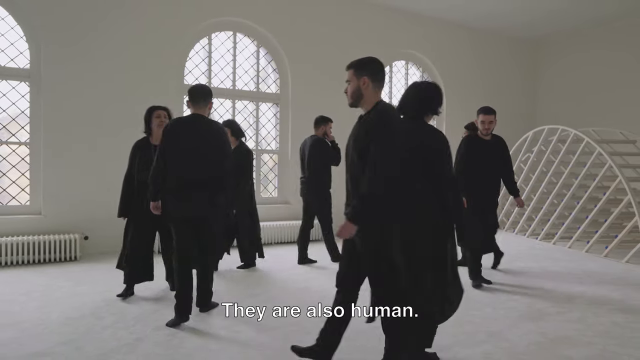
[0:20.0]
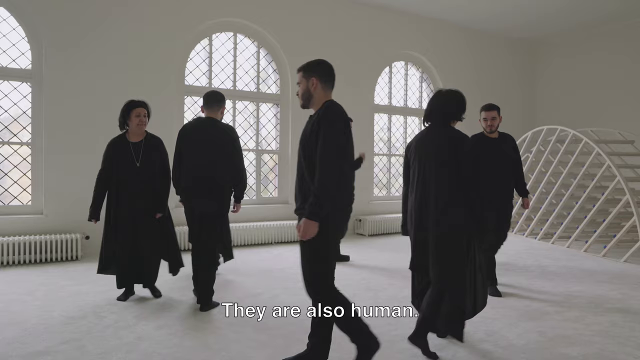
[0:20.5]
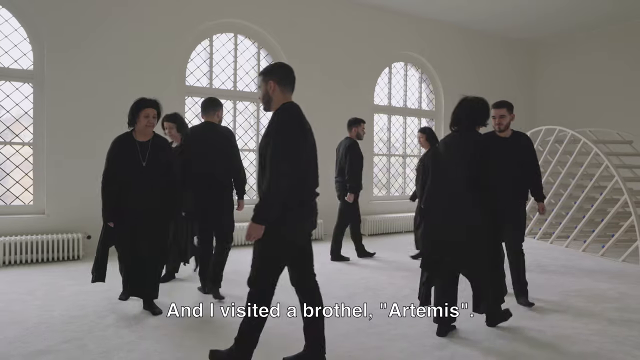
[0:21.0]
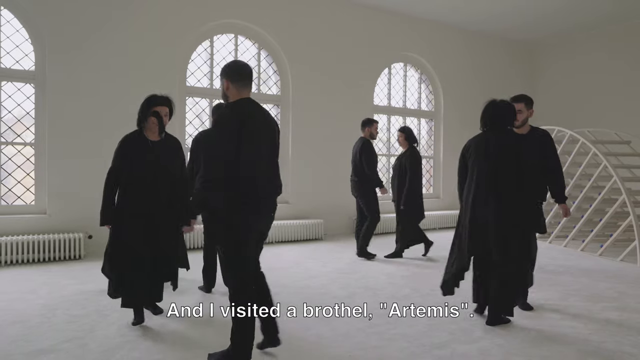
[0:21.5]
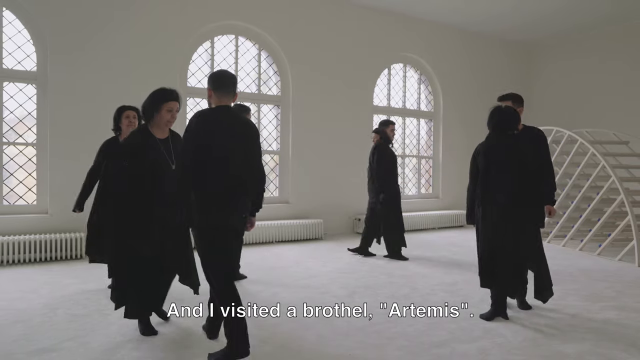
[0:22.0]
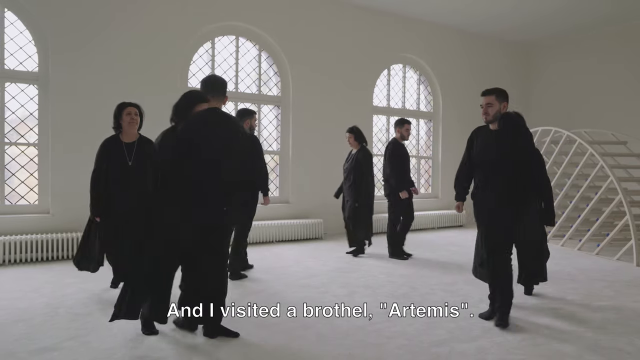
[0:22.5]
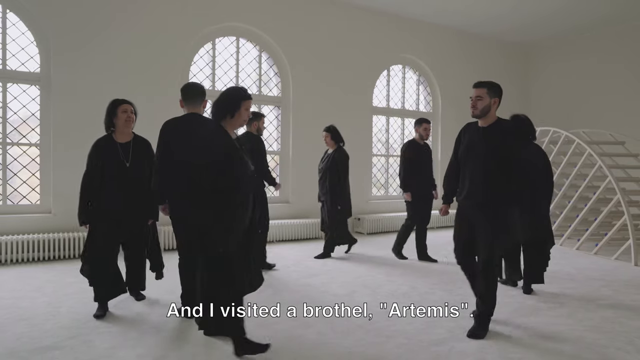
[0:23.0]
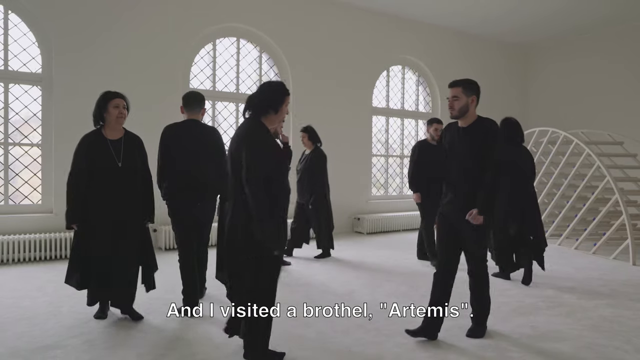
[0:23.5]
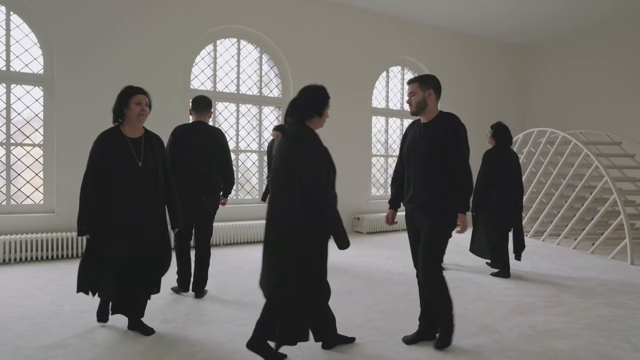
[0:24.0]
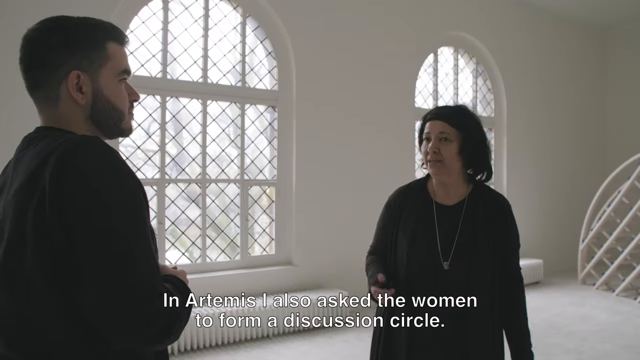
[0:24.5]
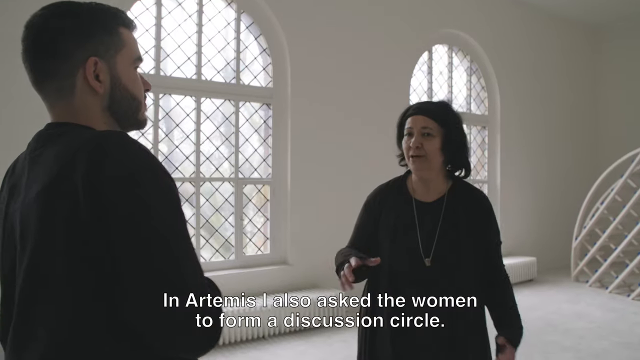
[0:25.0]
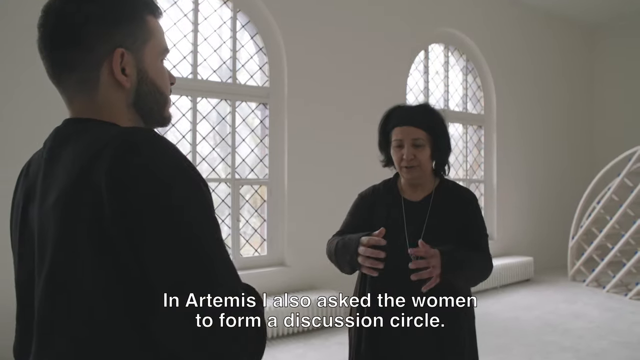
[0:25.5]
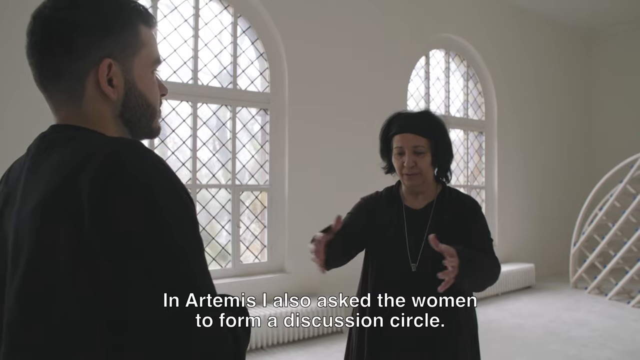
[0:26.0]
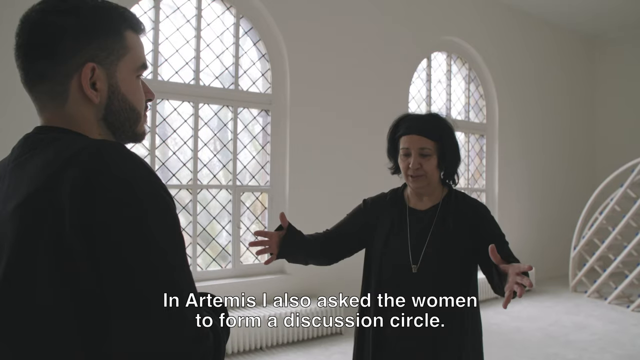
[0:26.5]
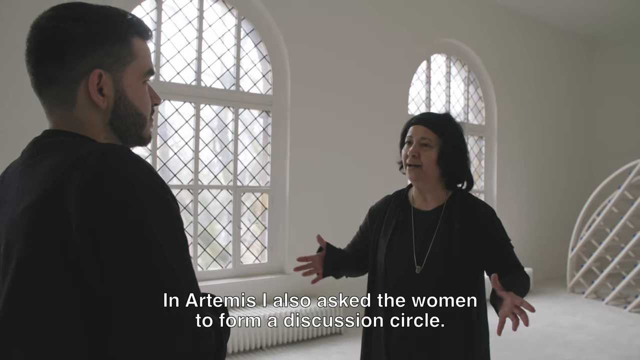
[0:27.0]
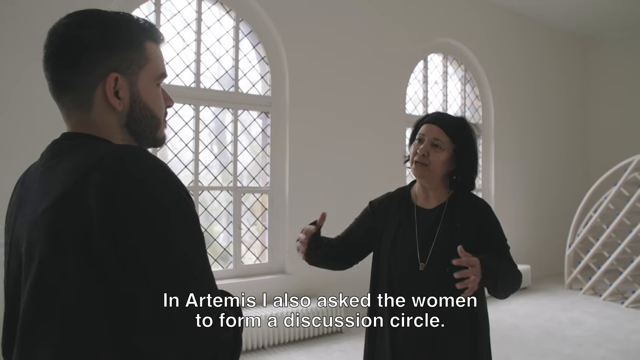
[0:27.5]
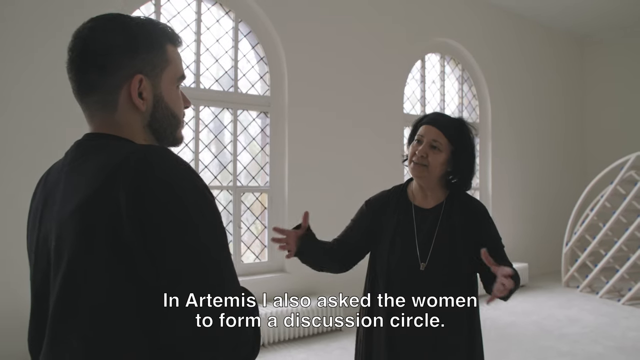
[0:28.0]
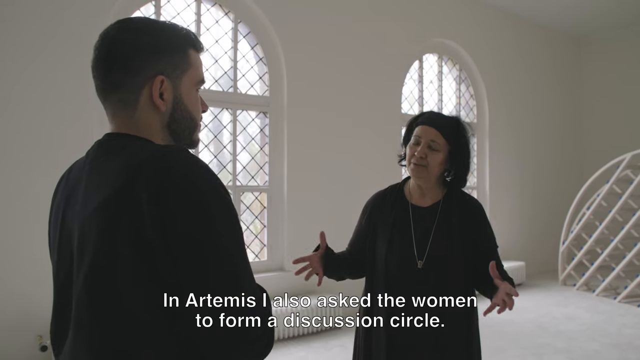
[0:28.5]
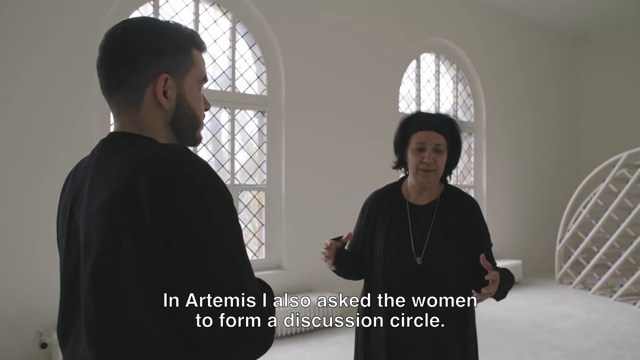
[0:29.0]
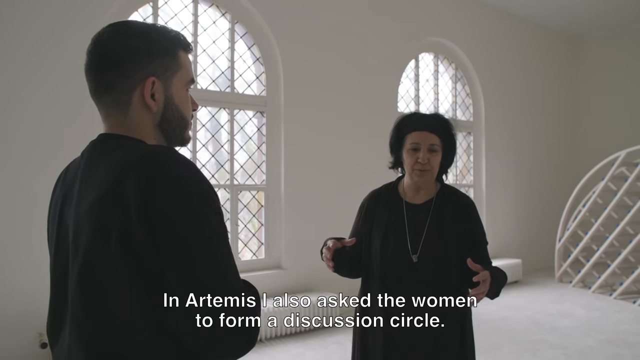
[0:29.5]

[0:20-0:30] The people, apparently at least about nine of them, are walking around and start to talk to each other. At the start, the bottom caption says "they're also humans". A slightly older lady talks to a young man, and the caption on the screen says "I visit the brothel." Then it says "in our team, if I also ask a woman to form a discussion circle". The woman has dark hair and appears to wear a black headband, a long coat-like jacket and a necklace; her shirt and pants are both black, and she does not appear to wear any other jewelry. The young man is the one seen at the very beginning of the video. He stands listening to her; he appears to be no older than maybe his late 20s and has a low, flat-looking haircut with dark, straight hair. None of the people seem to be people of color.